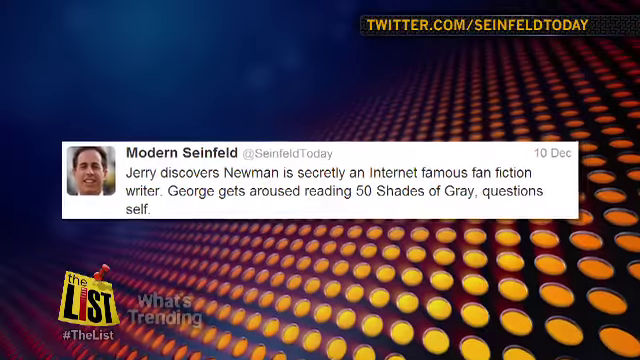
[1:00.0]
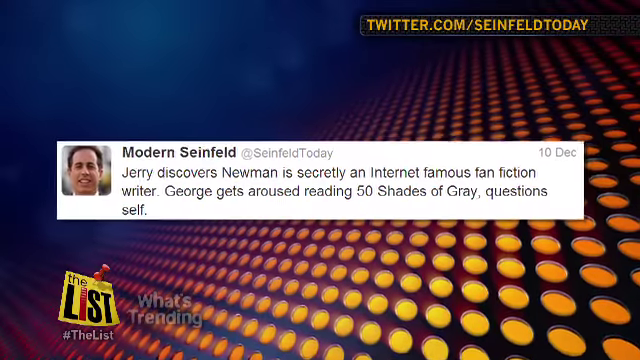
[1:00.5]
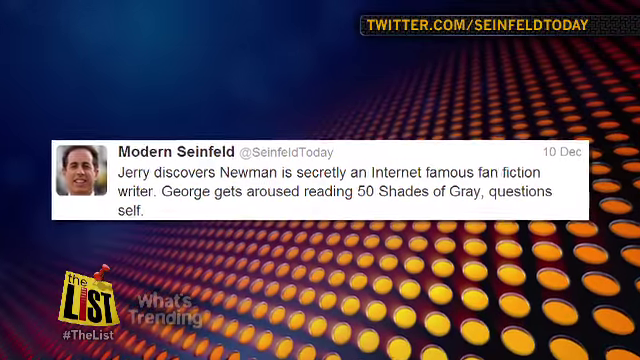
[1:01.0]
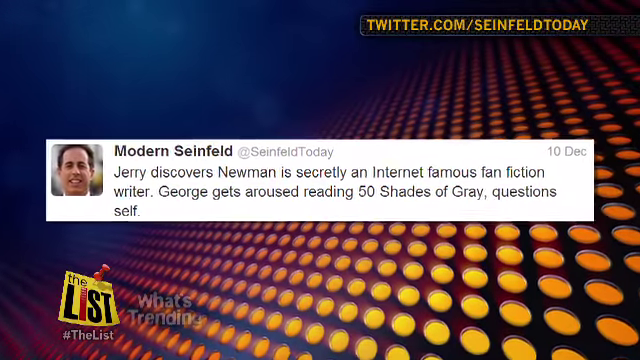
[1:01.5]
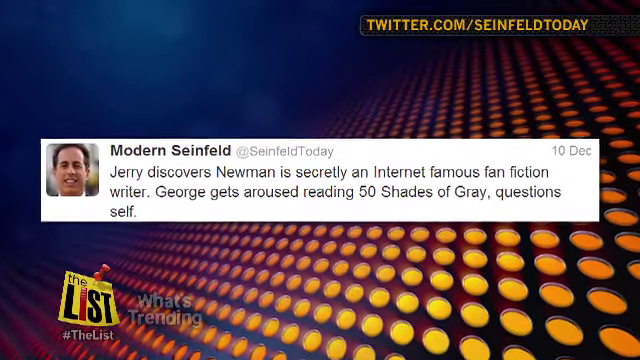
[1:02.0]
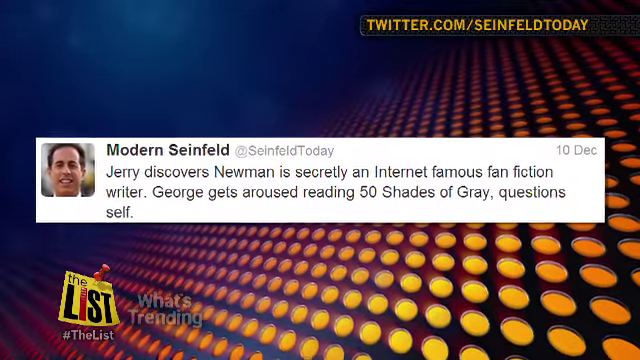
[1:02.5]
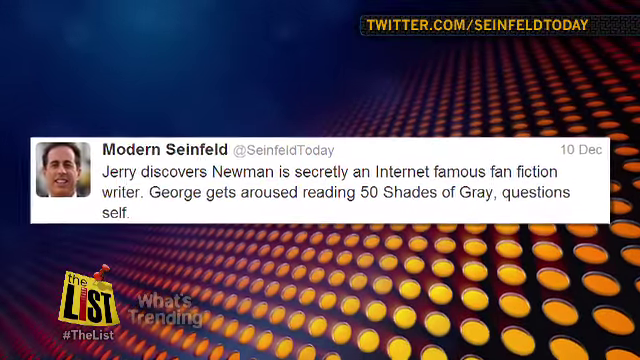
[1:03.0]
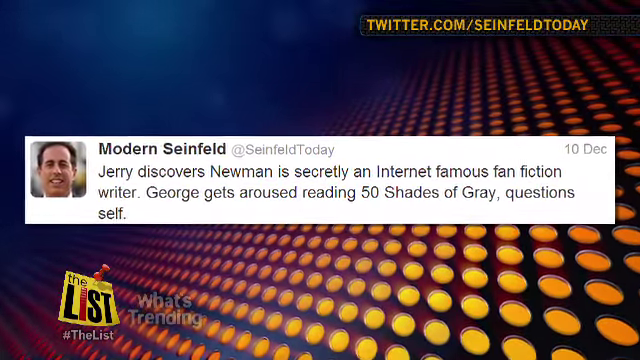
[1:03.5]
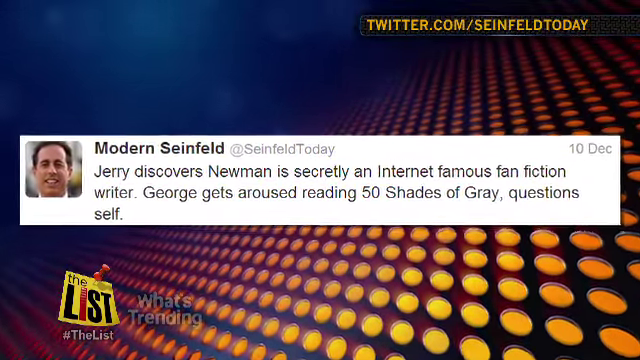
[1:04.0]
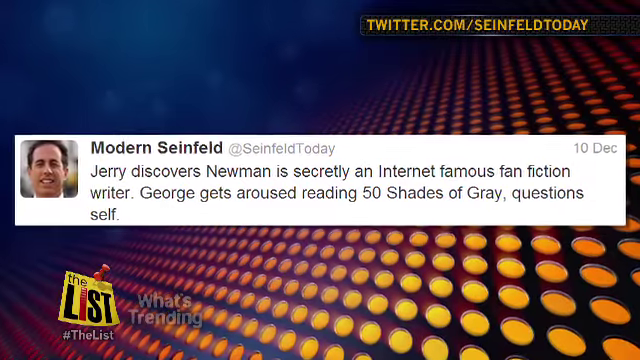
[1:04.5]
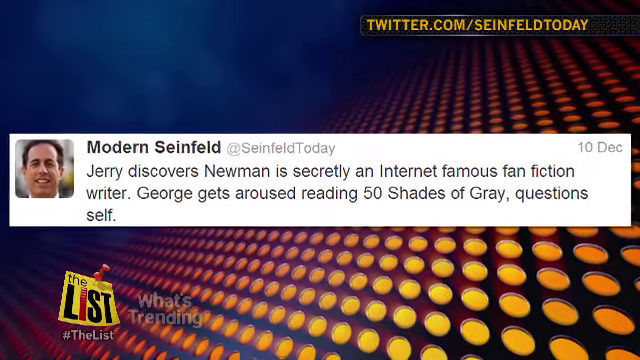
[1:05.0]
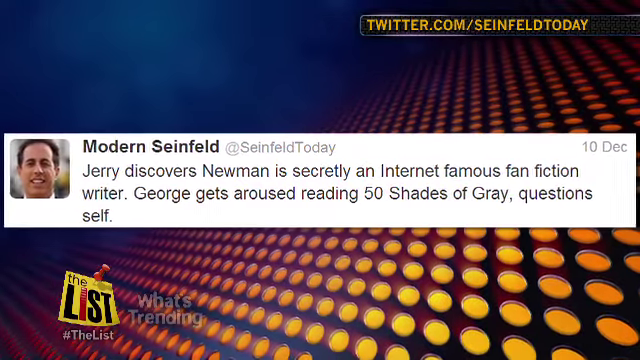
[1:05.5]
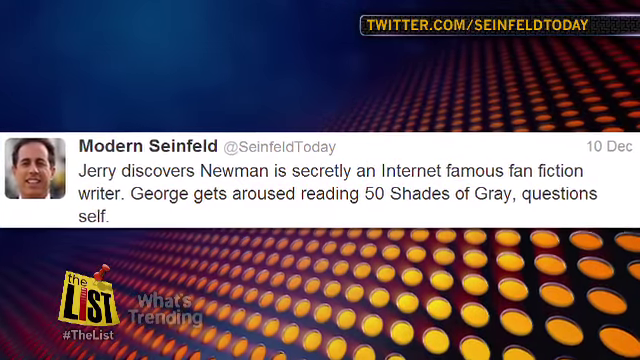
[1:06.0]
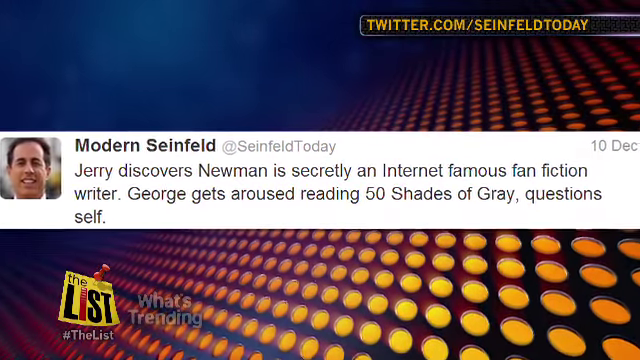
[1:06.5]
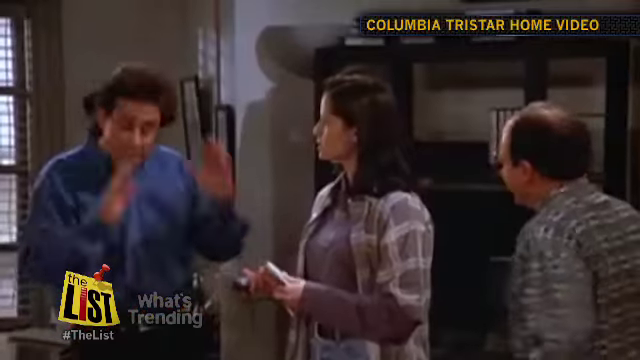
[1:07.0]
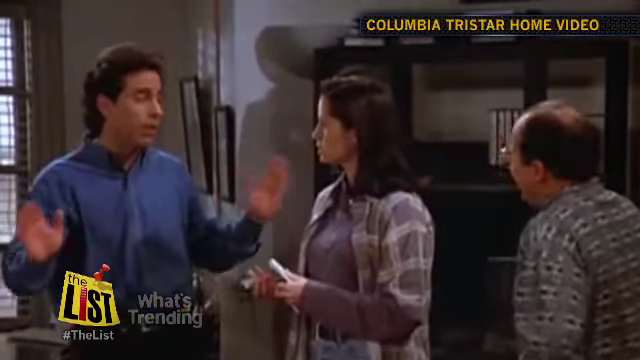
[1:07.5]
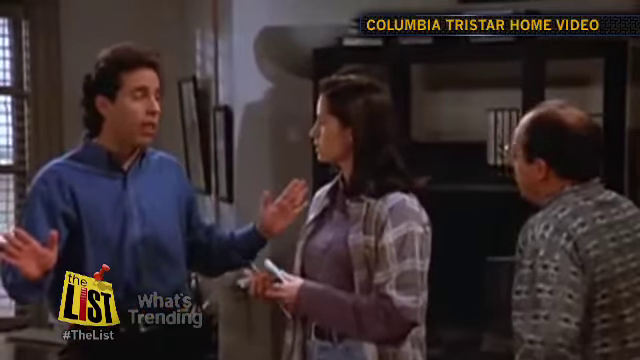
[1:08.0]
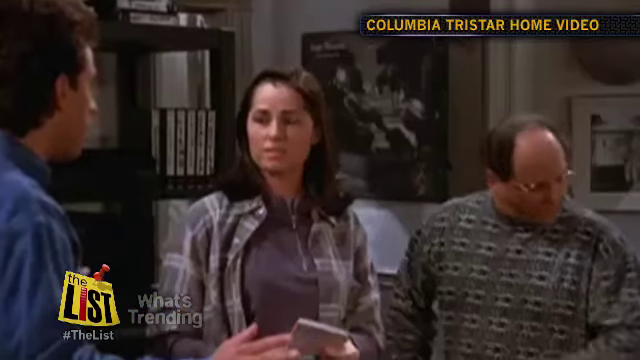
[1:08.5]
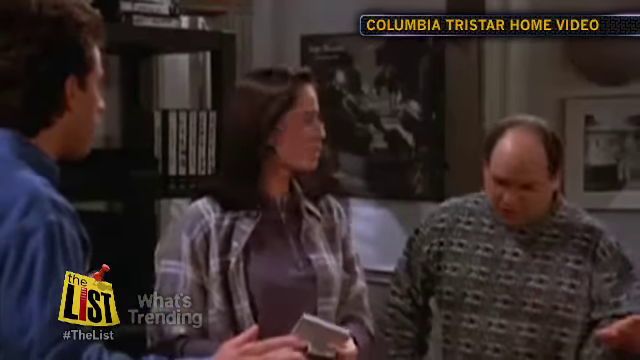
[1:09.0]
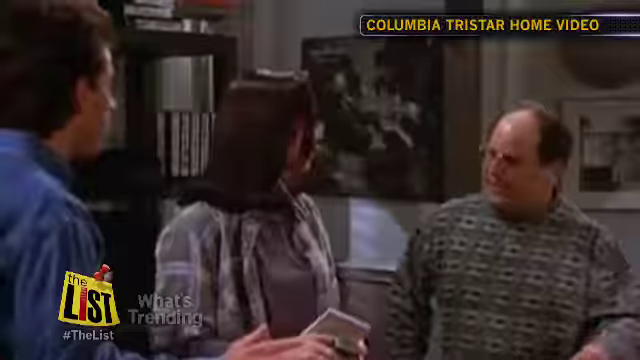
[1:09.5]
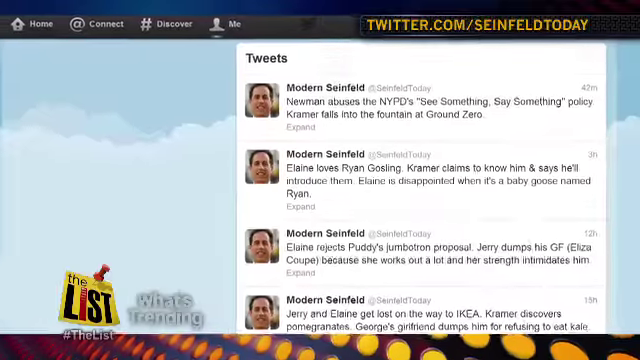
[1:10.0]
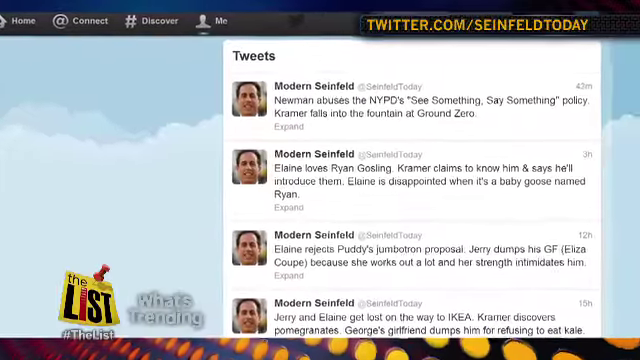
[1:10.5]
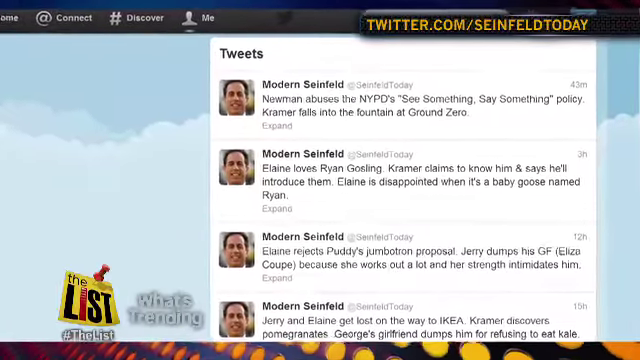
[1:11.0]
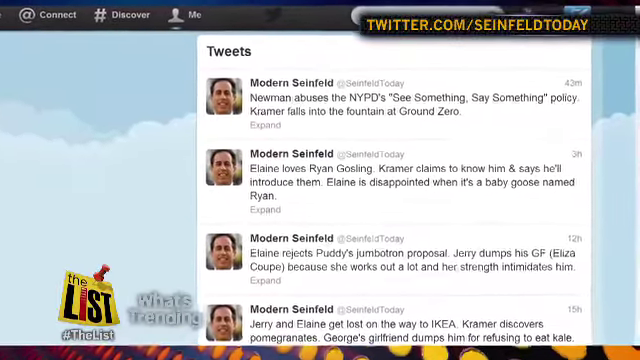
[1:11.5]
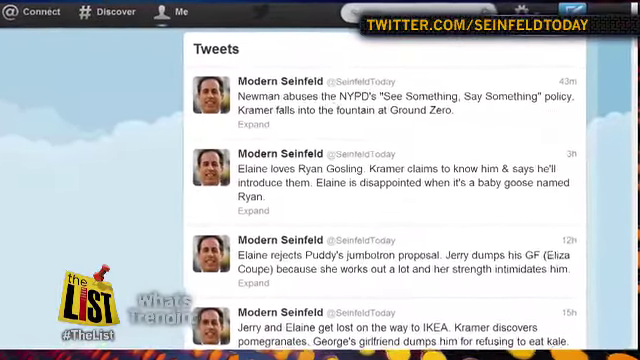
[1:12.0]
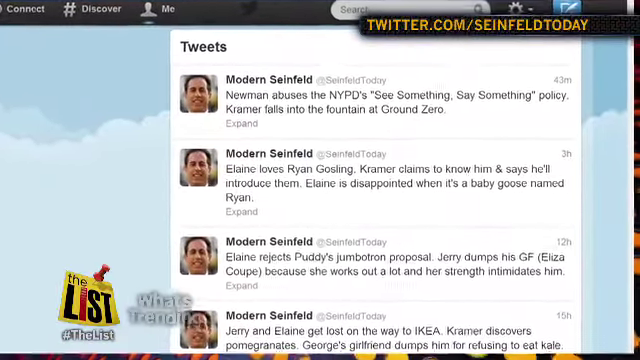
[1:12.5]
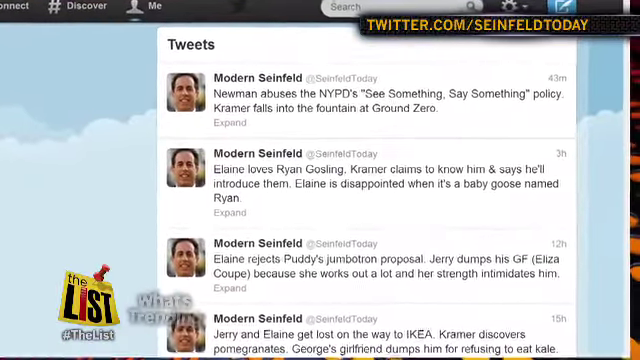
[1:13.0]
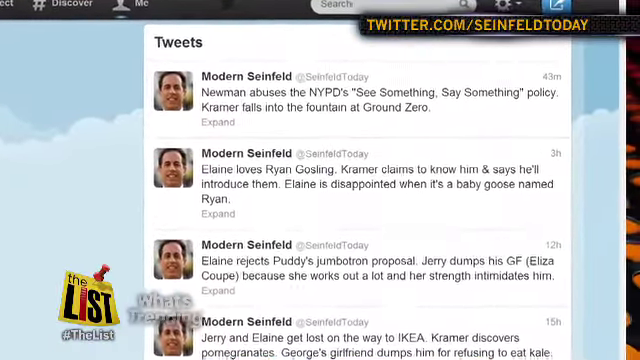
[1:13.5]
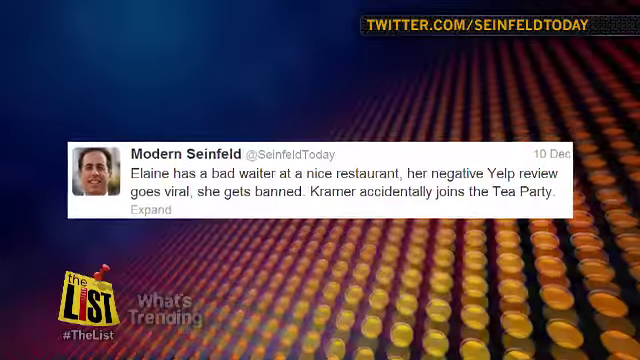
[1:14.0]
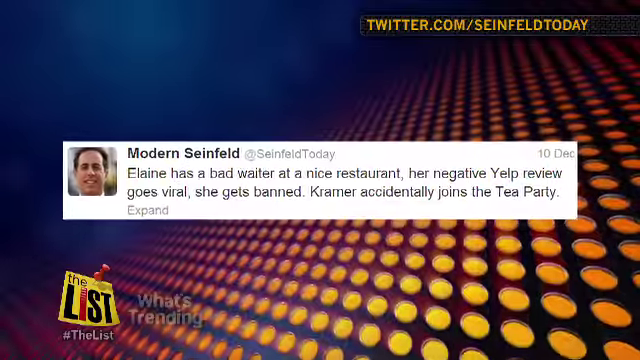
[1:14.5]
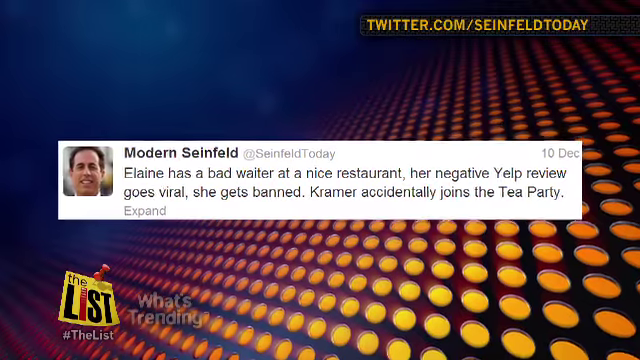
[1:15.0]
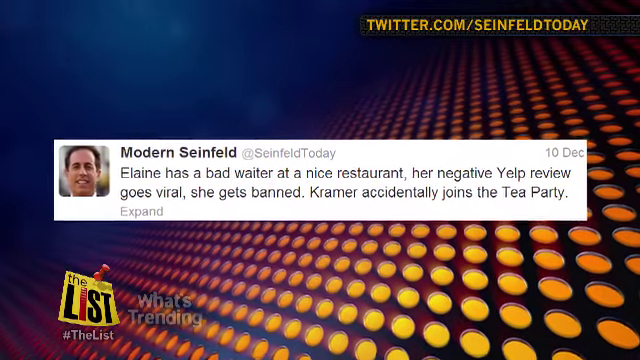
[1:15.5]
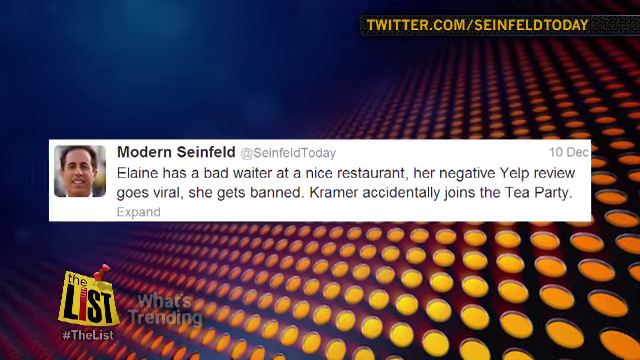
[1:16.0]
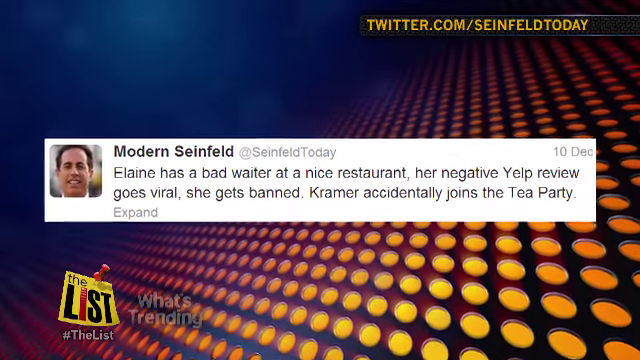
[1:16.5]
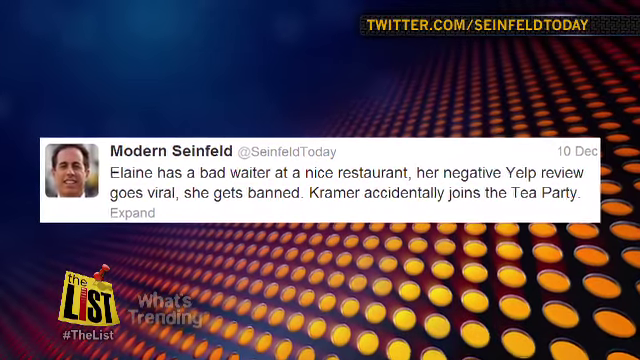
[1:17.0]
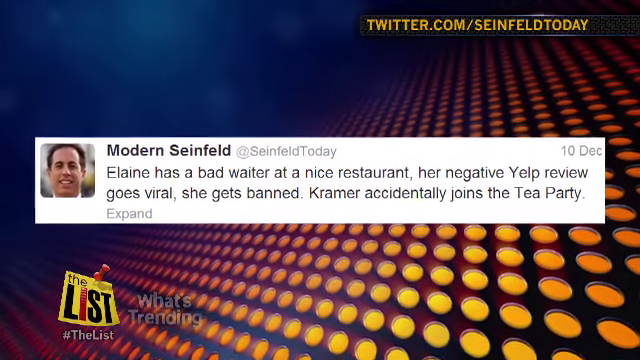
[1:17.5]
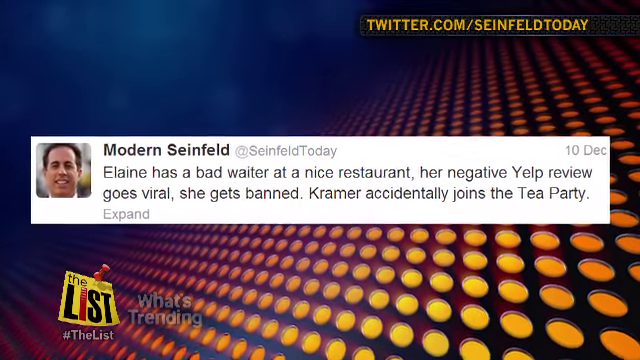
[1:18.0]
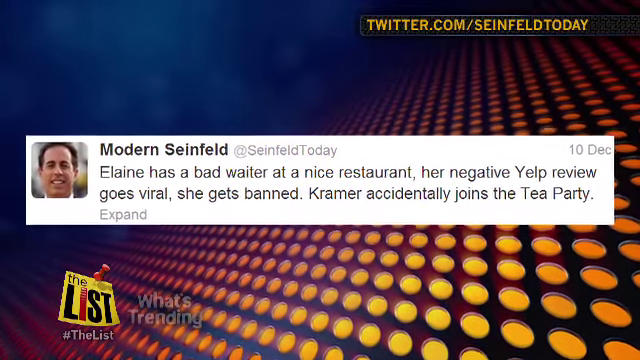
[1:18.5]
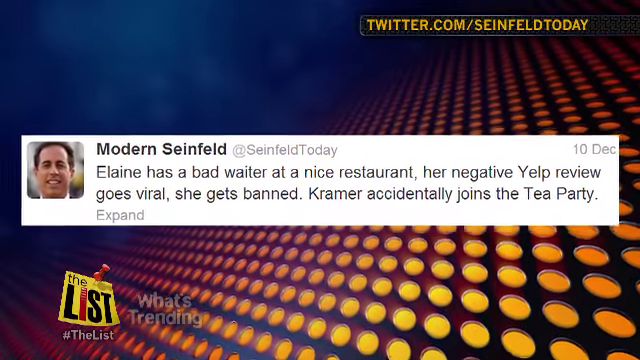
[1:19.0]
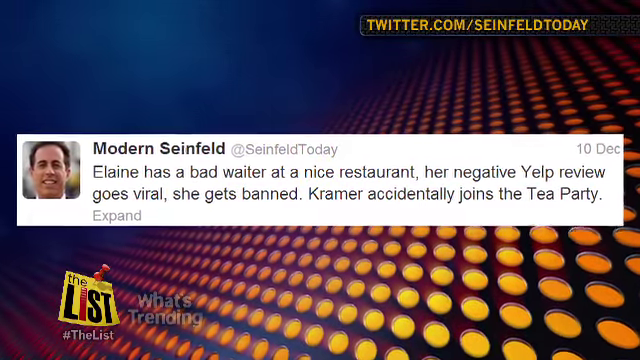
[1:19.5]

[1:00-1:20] The view zooms in, and there are lights in the background. Three people, two men and a woman, are having a conversation and seem not to understand each other. Another tweet, dated the 10th of December on what's trending, mentions Elaine, a bad waiter at a nice restaurant, and a negative Yelp review that goes viral, and says "Kramer accidentally joins the tea party." The tweet is zoomed in and out repeatedly. The video then returns to the men and woman in conversation, who wave their hands as they talk.